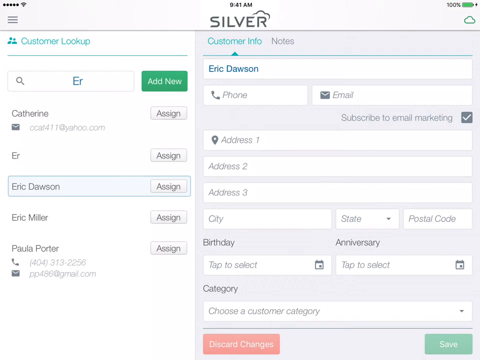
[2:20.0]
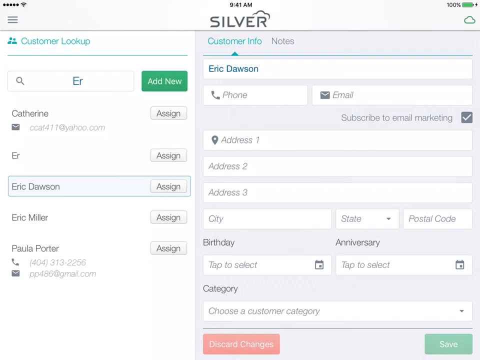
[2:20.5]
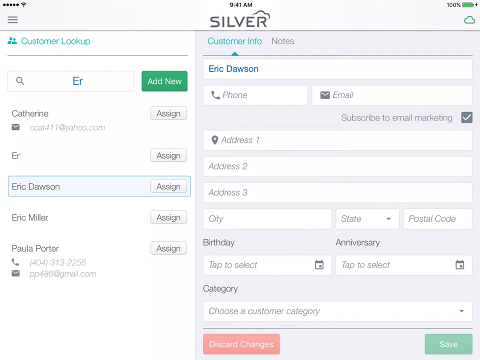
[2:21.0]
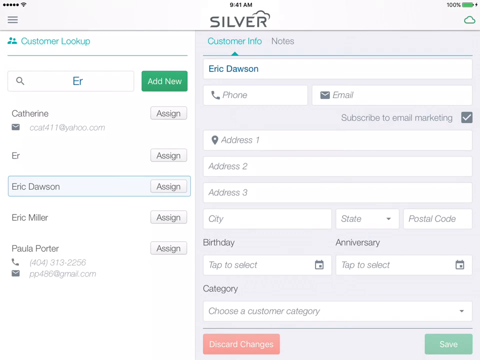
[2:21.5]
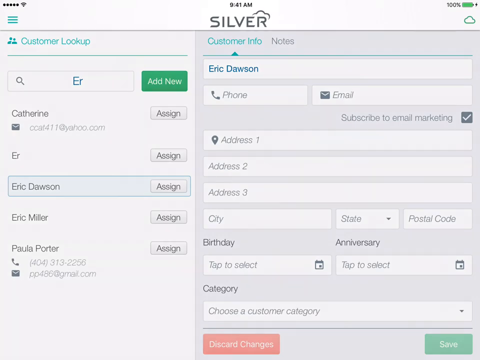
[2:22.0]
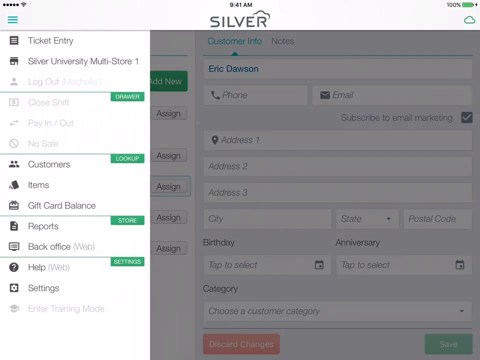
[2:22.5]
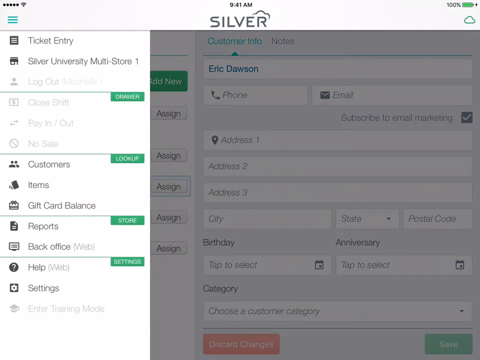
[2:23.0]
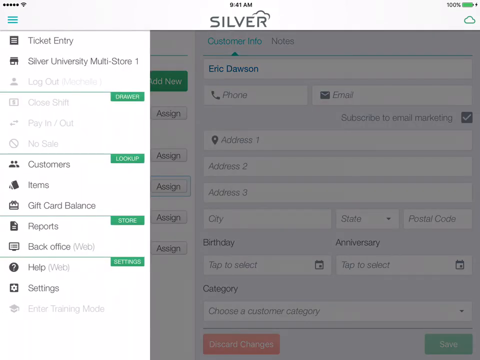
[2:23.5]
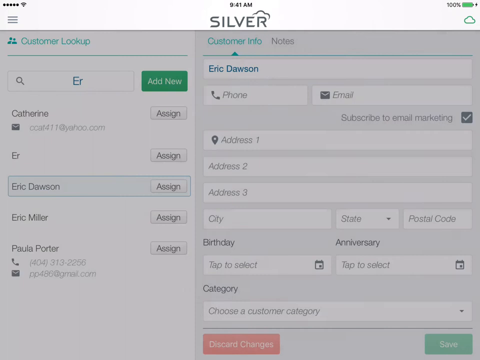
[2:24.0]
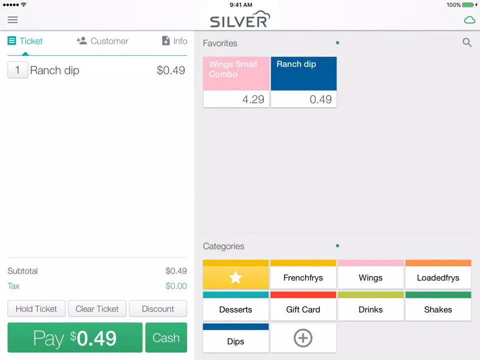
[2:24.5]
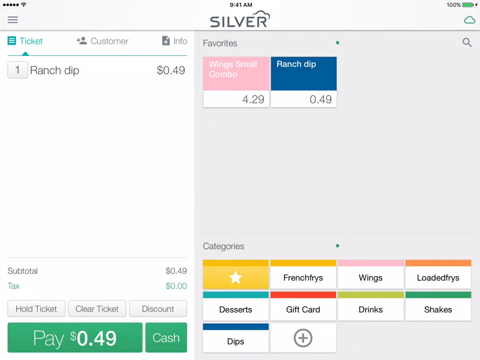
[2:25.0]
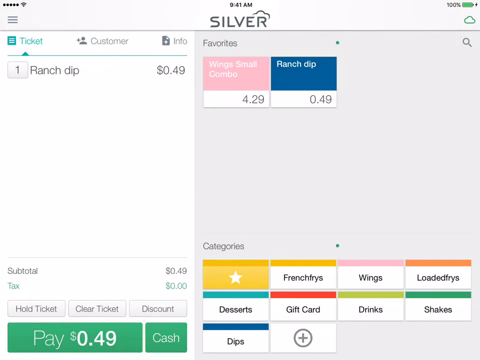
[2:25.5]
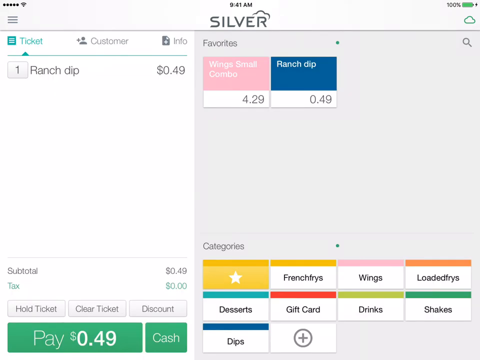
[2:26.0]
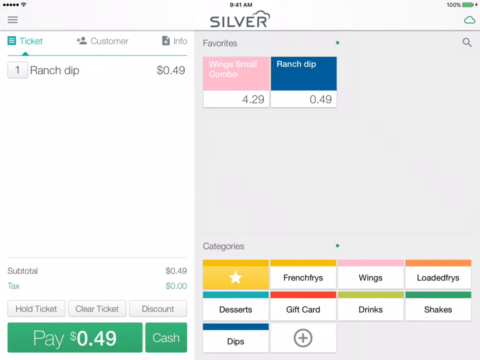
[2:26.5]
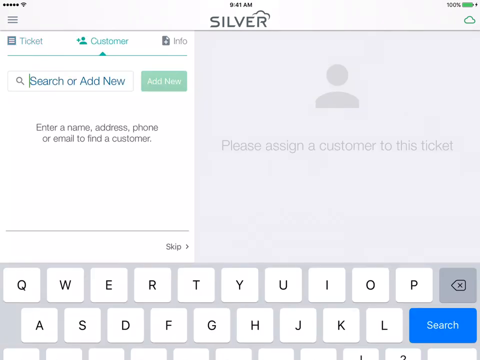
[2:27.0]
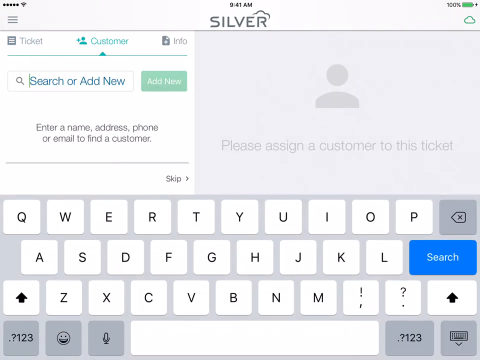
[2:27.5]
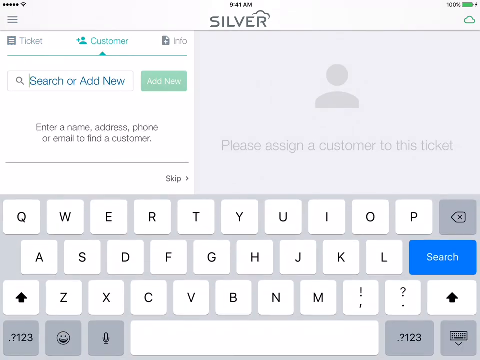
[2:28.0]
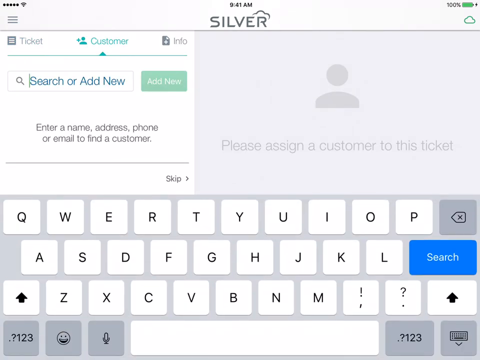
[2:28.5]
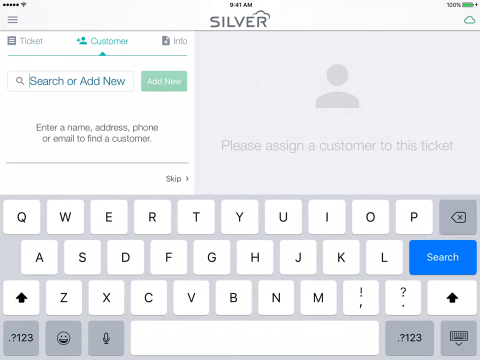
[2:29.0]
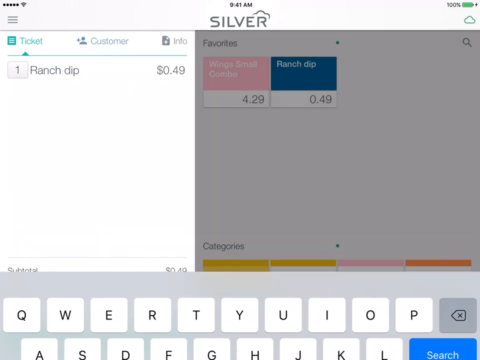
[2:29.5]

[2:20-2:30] Eric Dawson's profile, with little information on it, is still on screen. The user clicks the three horizontal bars again to open the menu from the left side and goes back to the ticket, apparently ticket entry. This is the same screen as the beginning, where the ranch dip was ordered, with the sort of itemized receipt on the left and all of the menu options on the right. There is a Ticket tab with a Customer tab right next to it. The user clicks the Customer tab, which brings up the on-screen keyboard from the bottom, apparently for searching or adding something new. He doesn't seem to click anything, but whatever action he takes seems to bring up an on-screen calculator just as the shot ends.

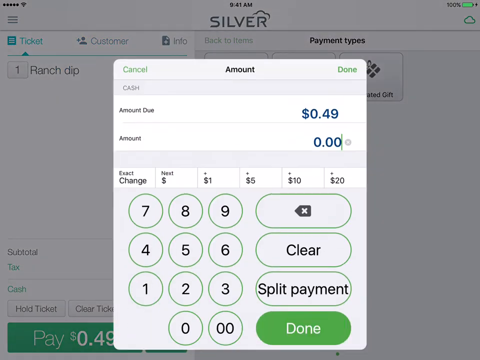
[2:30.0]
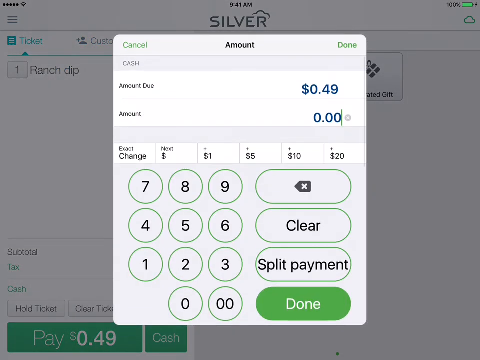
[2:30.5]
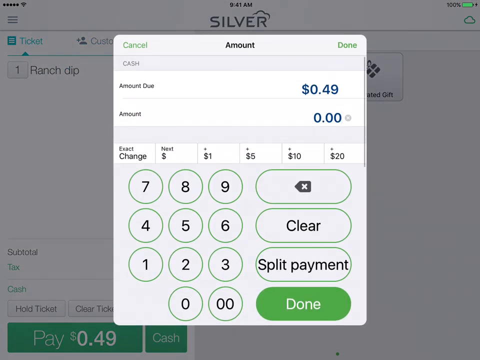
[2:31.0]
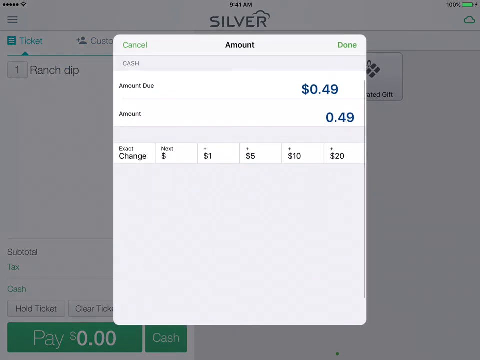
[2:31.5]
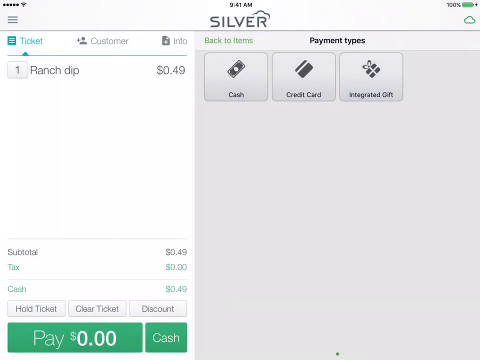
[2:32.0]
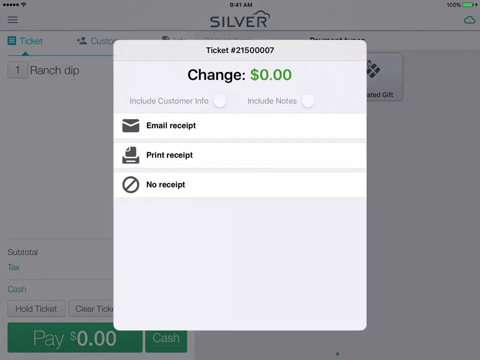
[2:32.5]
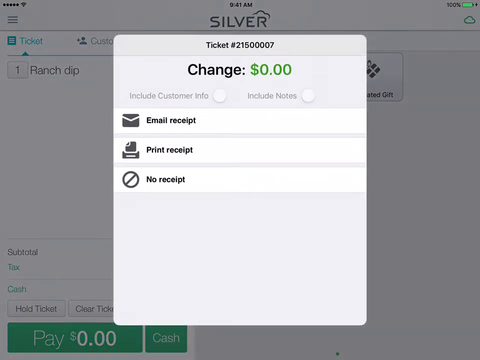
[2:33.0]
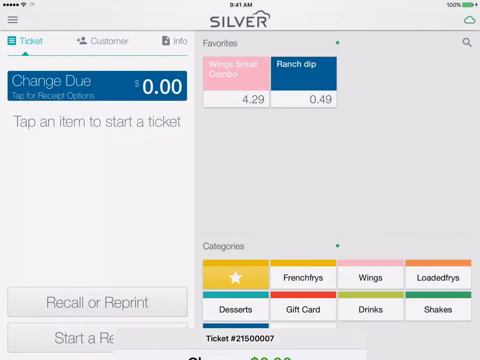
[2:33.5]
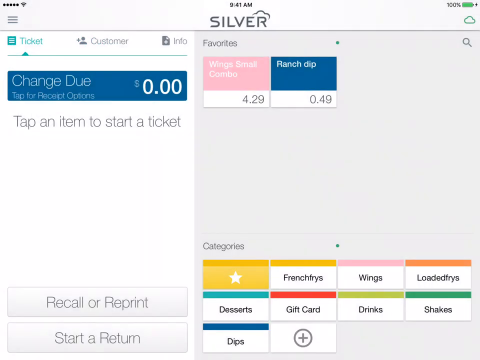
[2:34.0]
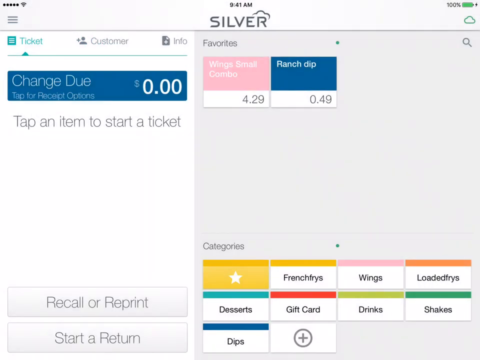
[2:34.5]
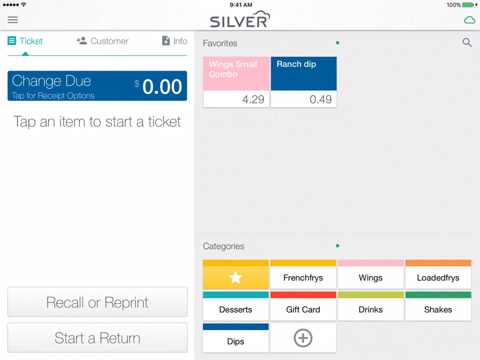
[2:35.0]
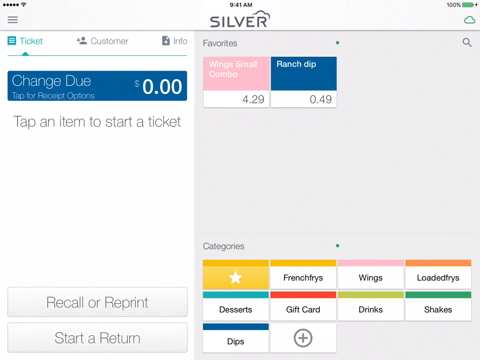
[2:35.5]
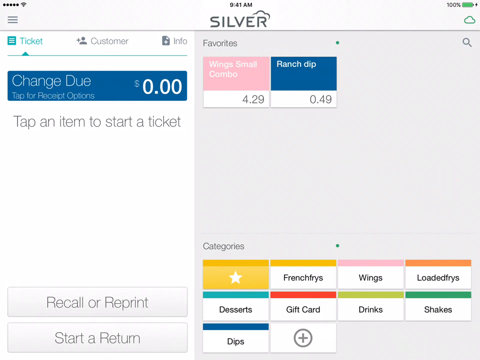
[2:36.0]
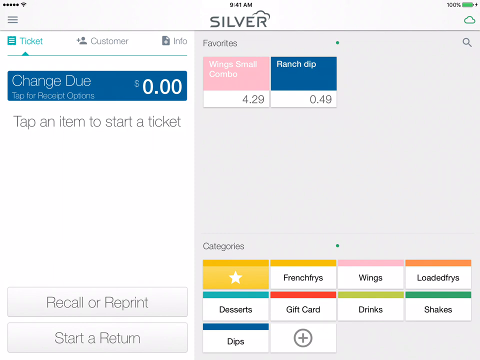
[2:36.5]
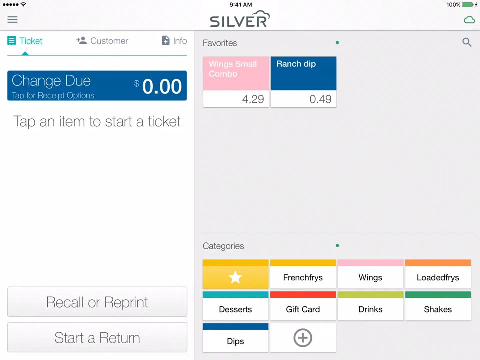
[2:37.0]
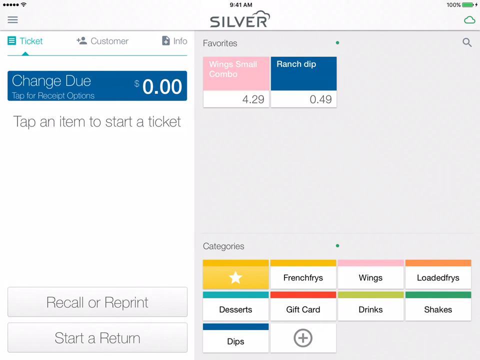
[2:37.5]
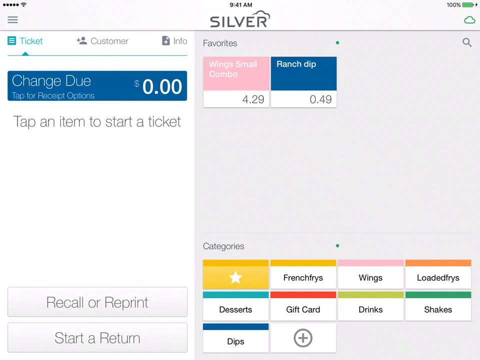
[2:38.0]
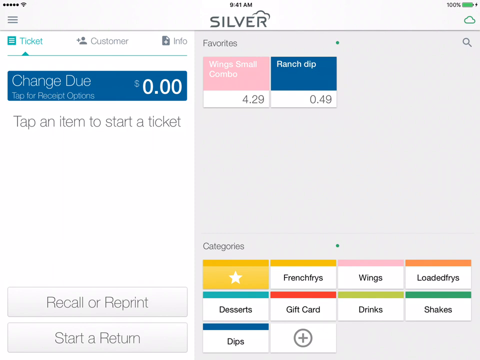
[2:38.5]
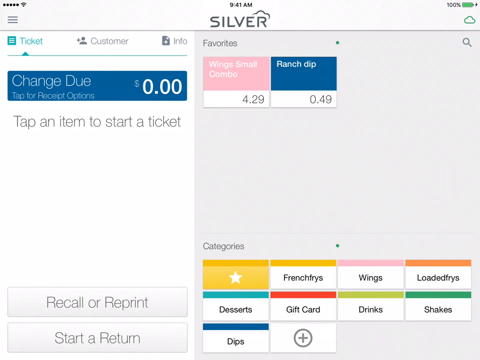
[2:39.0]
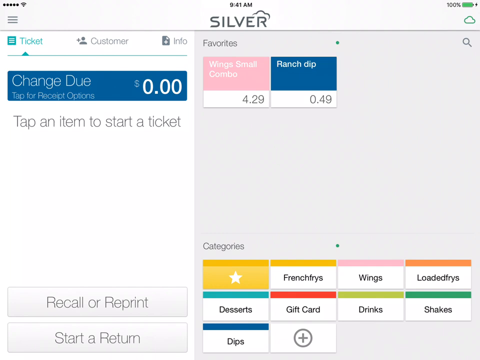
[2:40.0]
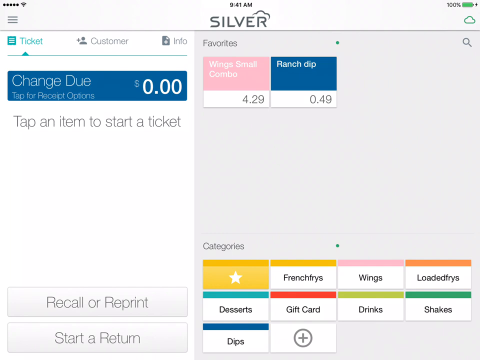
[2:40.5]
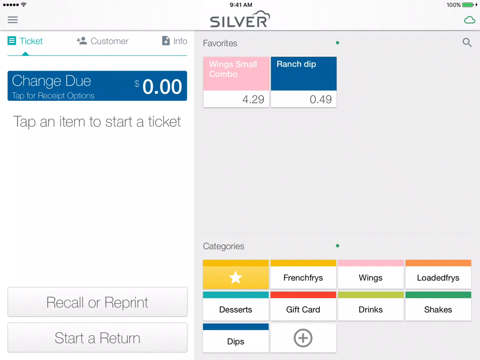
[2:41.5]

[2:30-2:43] A calculator-like pop-up window shows the amount due, 49 cents, and another area for amount, which is zero. It apparently serves as a change calculator, with an exact change button, $1, $5, $10 and $20 options, and a split payment button. Apparently the order is paid, as a new window pops up reading "change $0.00", with the dollar amount in green text, along with receipt options: email, print, or no receipt. This stays on screen for a second or so, then the ordering menu returns with a blue bar reading "change due $0.00". It appears the customer has purchased the 49-cent ranch dip.